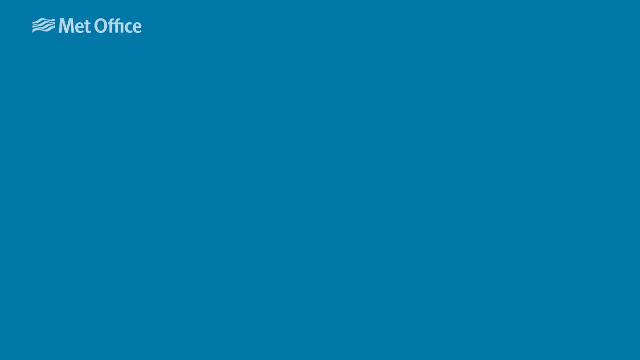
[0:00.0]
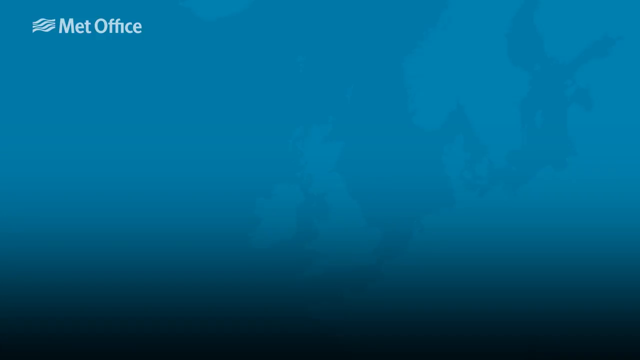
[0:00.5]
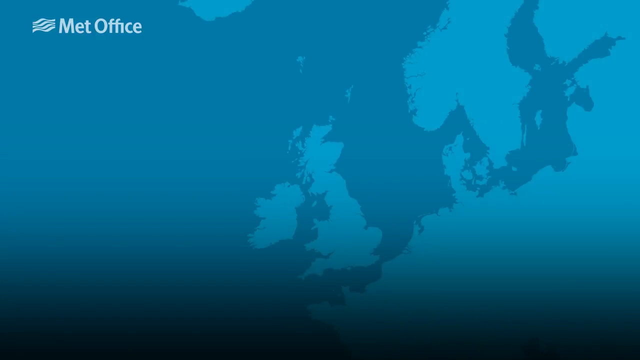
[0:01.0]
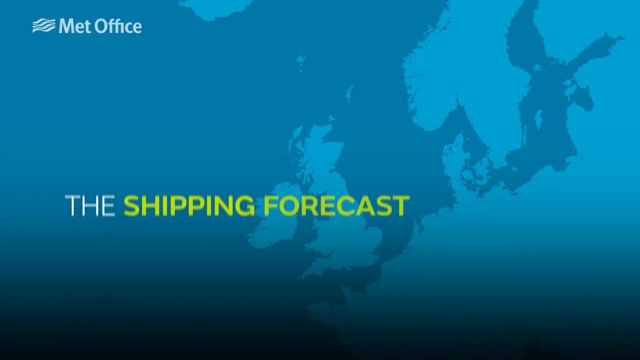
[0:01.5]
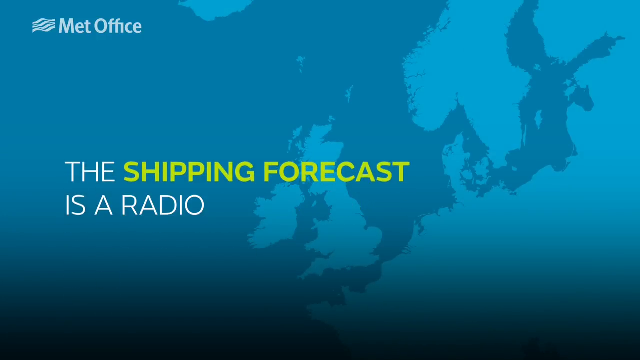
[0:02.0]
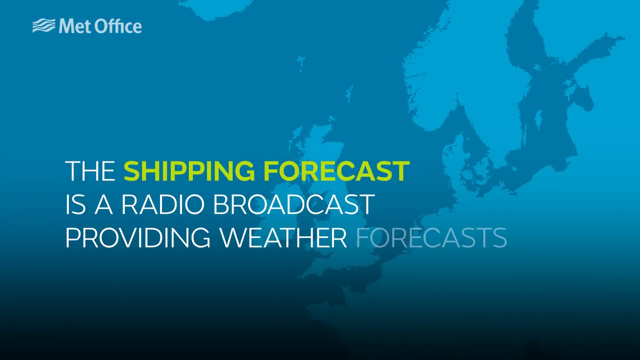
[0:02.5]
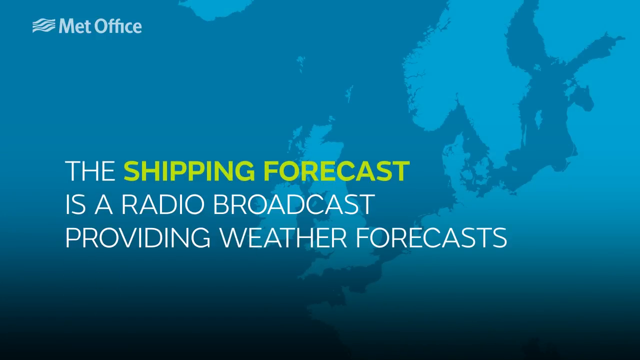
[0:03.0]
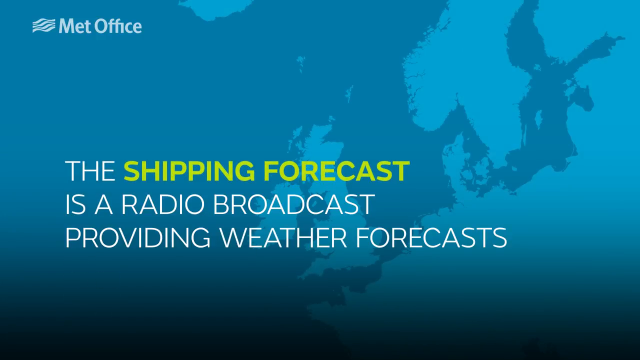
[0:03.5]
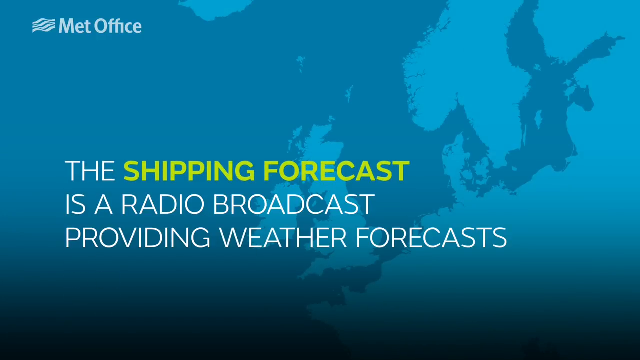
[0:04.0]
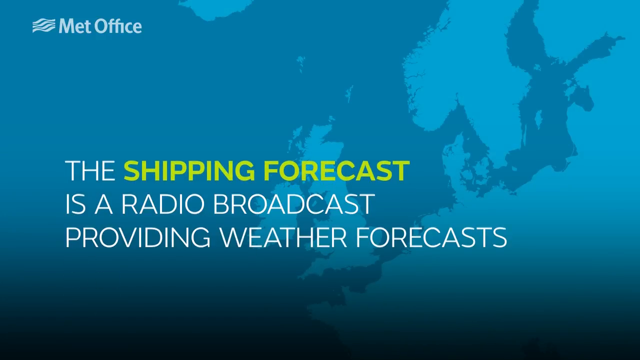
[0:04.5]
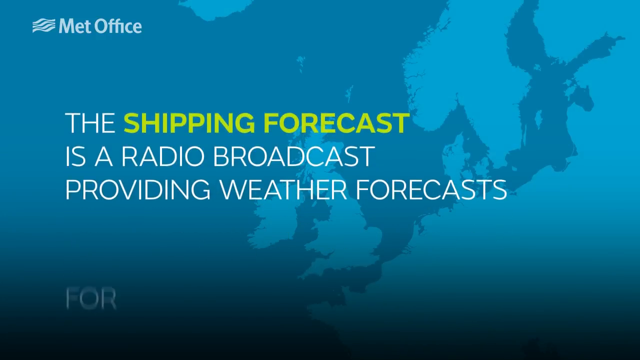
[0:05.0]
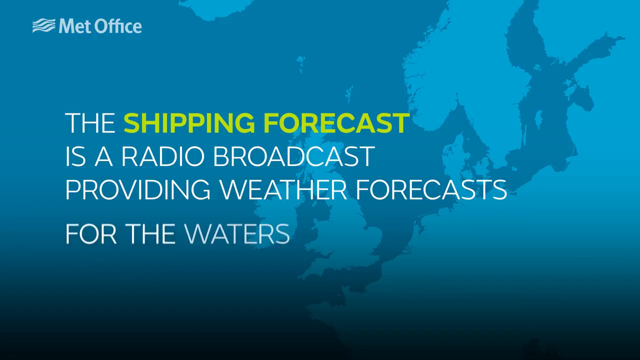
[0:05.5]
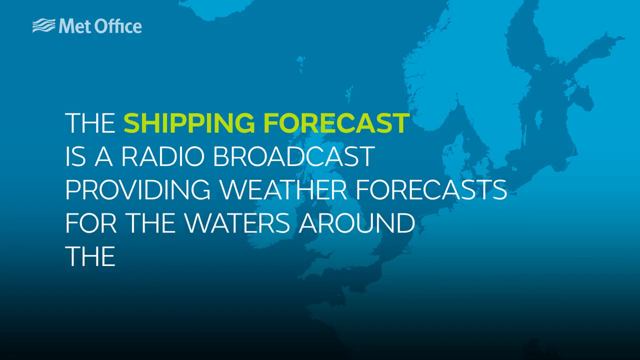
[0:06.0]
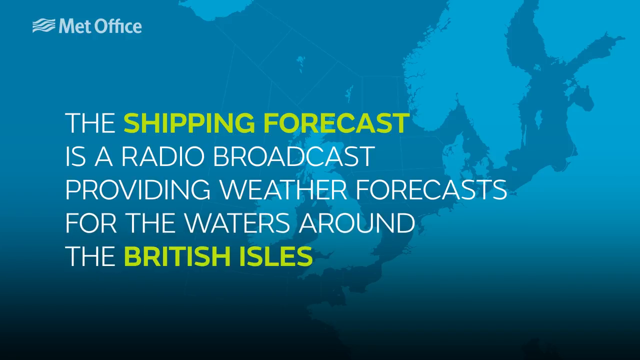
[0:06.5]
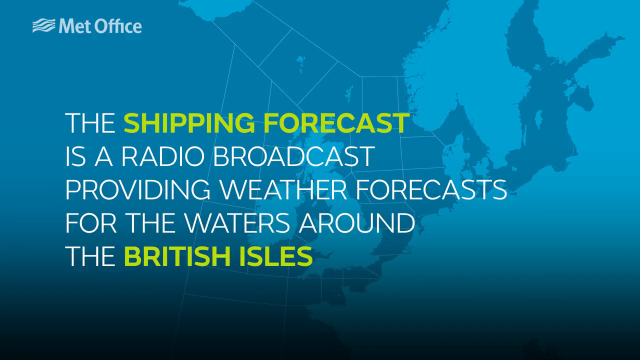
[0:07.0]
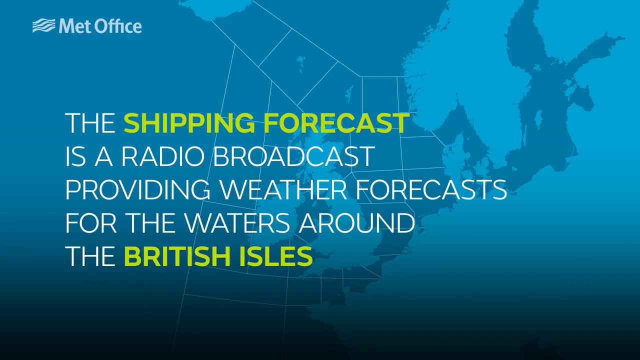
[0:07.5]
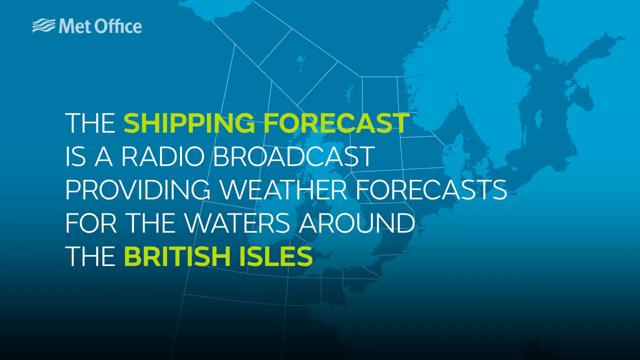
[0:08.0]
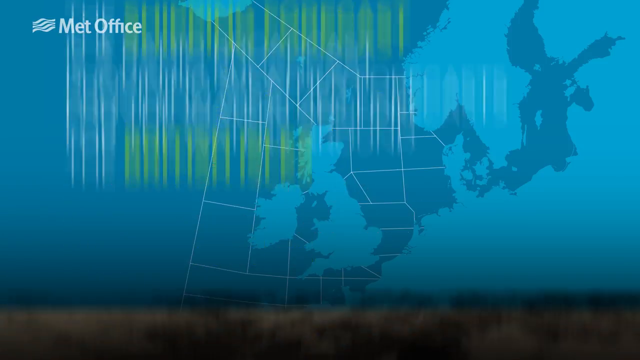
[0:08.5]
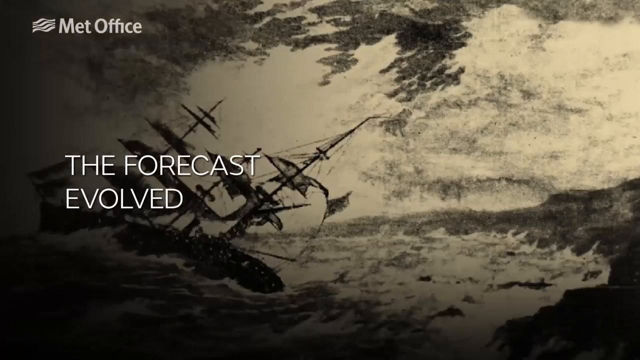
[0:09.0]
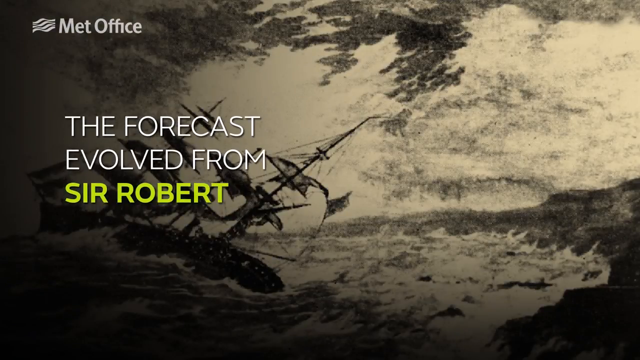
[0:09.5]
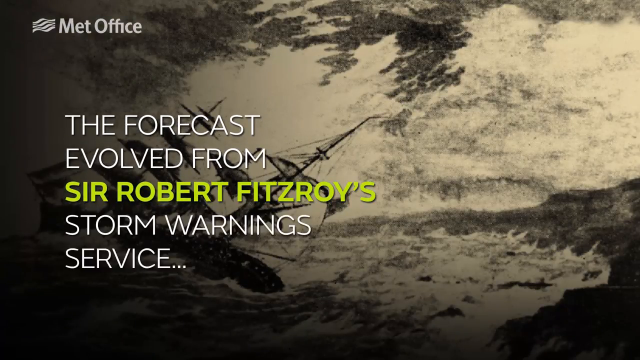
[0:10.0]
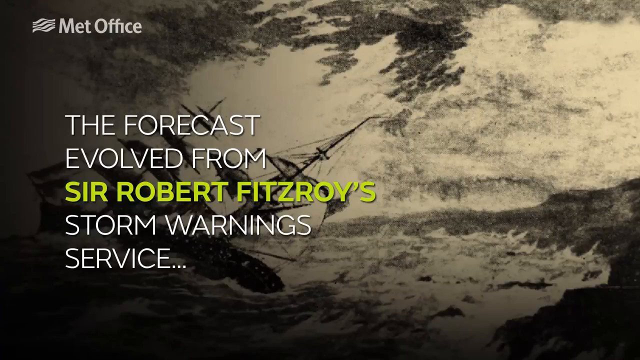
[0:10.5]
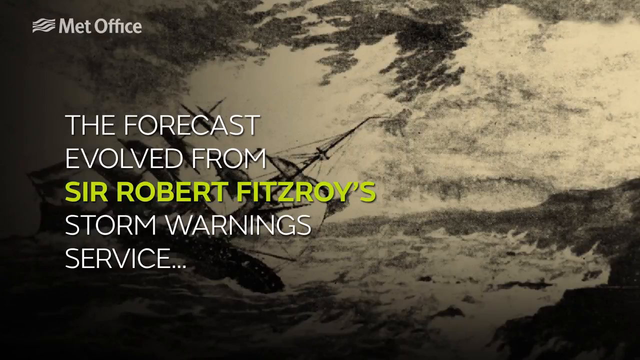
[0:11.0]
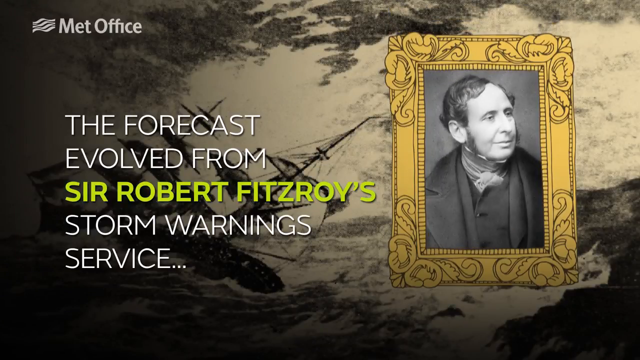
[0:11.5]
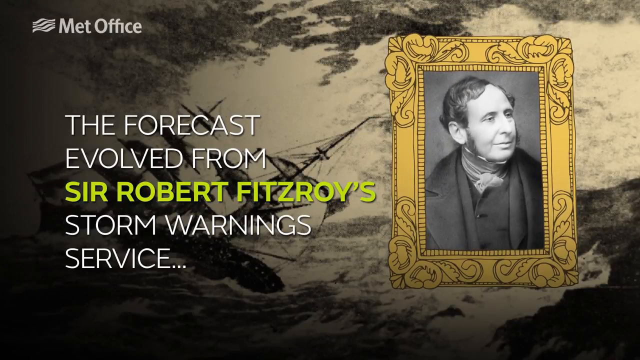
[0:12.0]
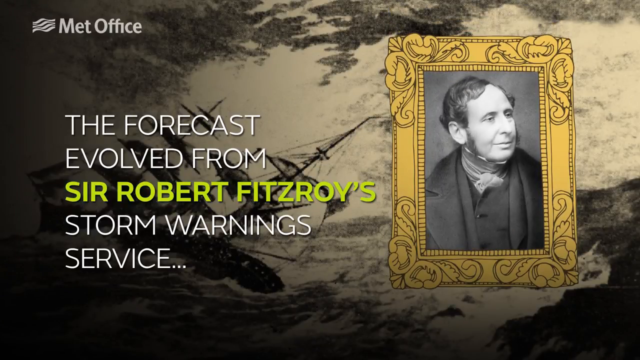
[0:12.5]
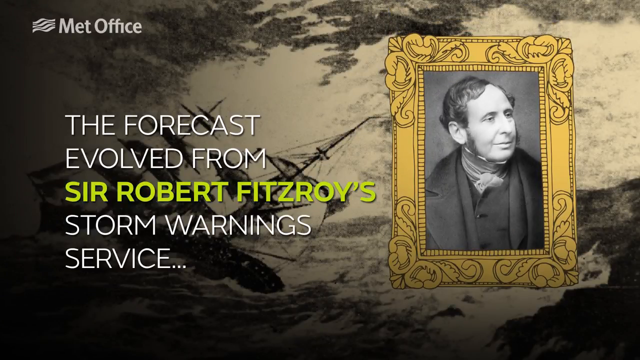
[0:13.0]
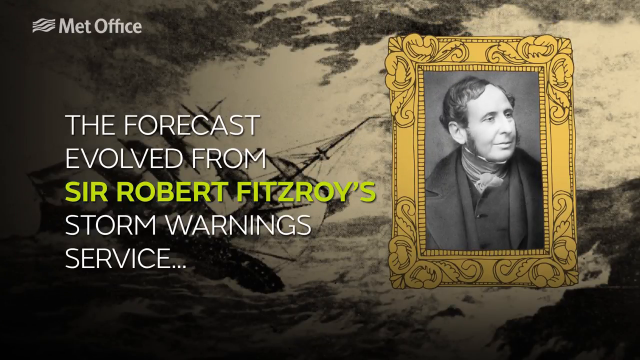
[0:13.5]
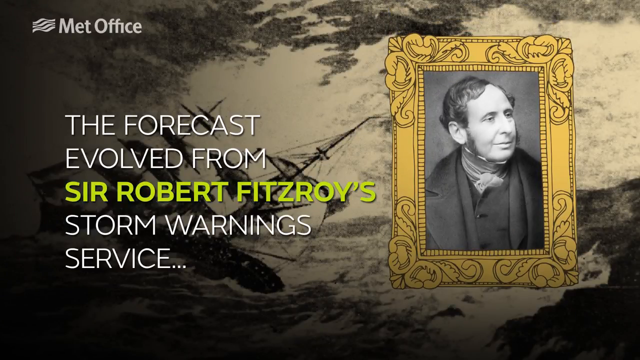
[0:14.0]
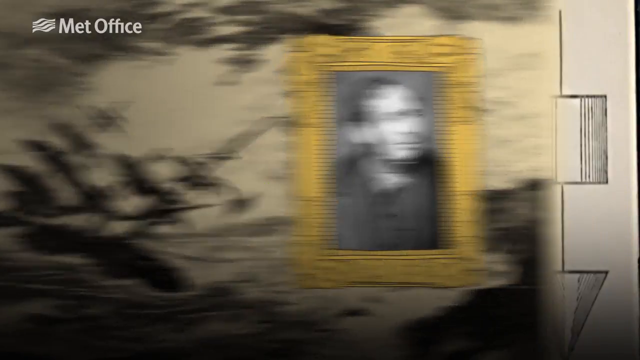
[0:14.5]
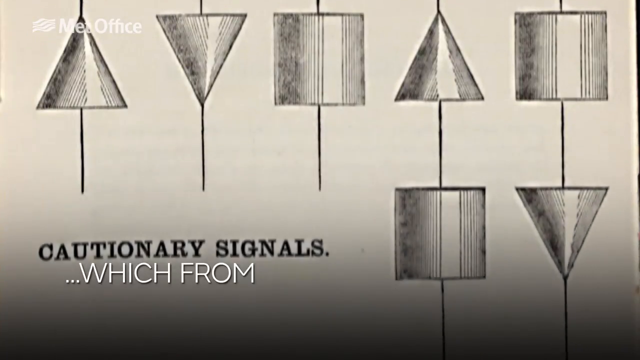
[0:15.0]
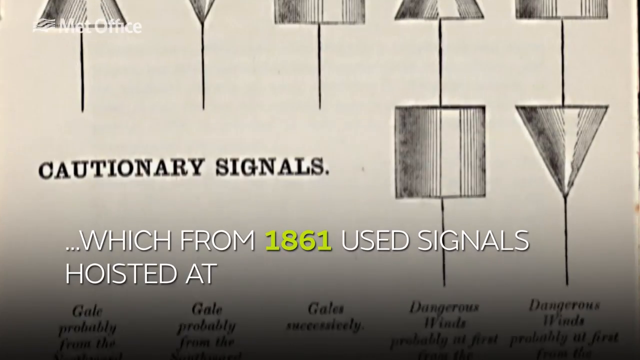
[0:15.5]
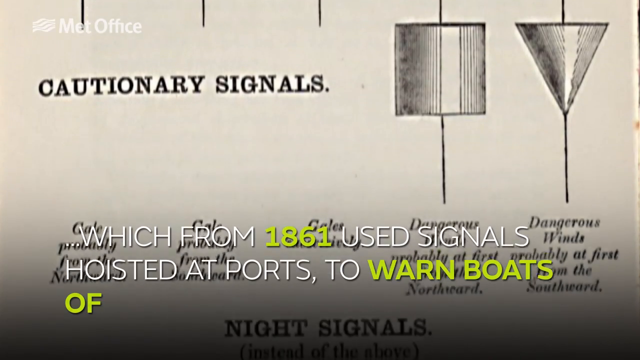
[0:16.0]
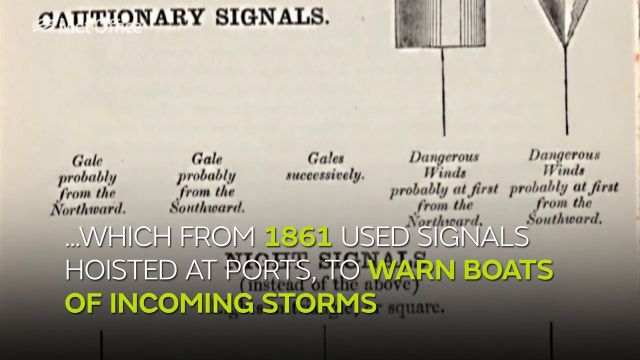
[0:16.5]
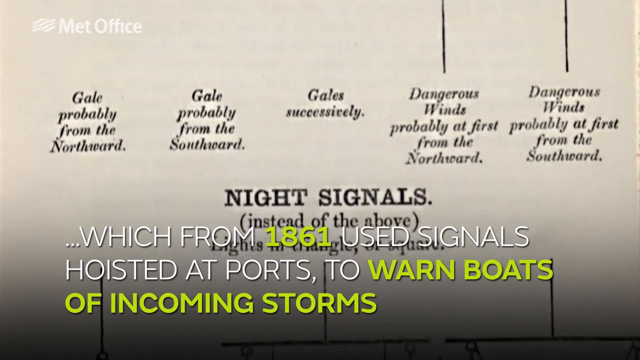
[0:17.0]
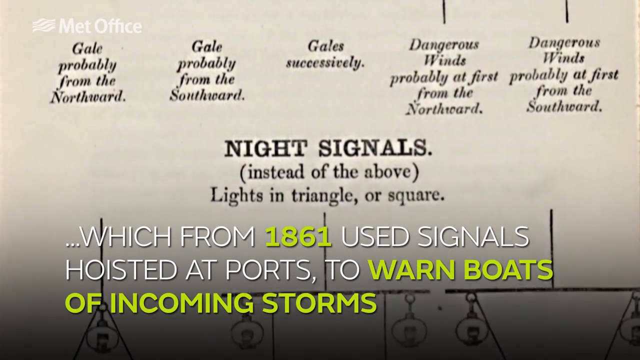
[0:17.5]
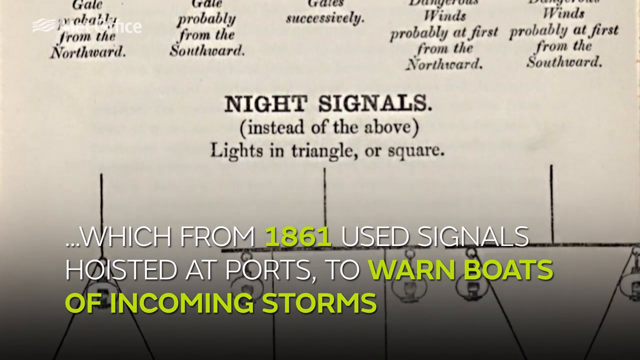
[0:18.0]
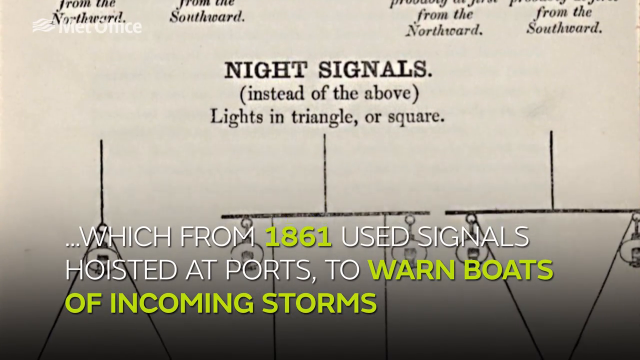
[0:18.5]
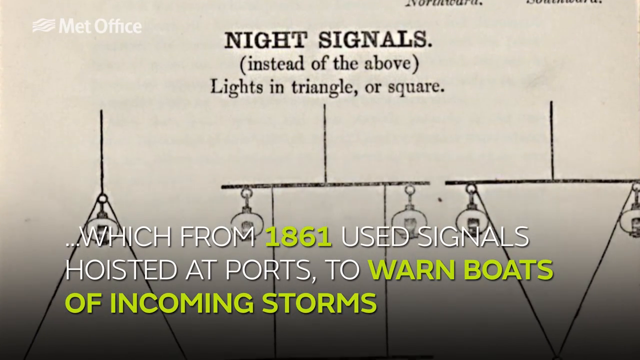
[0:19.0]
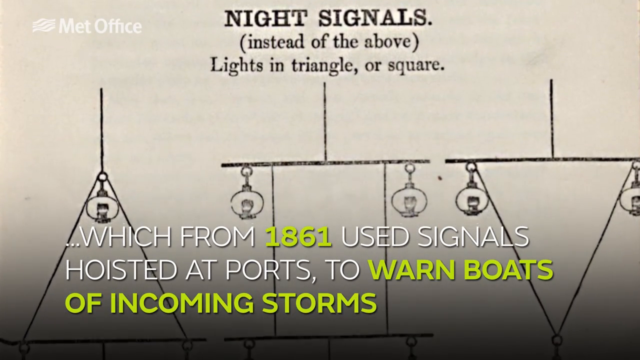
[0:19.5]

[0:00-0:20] On-screen text reads "the shipping forecast is a radio broadcast providing weather forecast", and "Met Office" is shown at the top of the video. The text continues with "for the waters around". Next, text explains that the forecast evolved from Robert Fitzroy's storm warning service. Behind the text is a frame, and an image from old centuries is shown next to the text. Further text lists gale warnings, including "dangerous wild winds". Text also refers to weather reports from 1861 that used hoisted signals to warn boats, and images related to the weather forecast are shown.